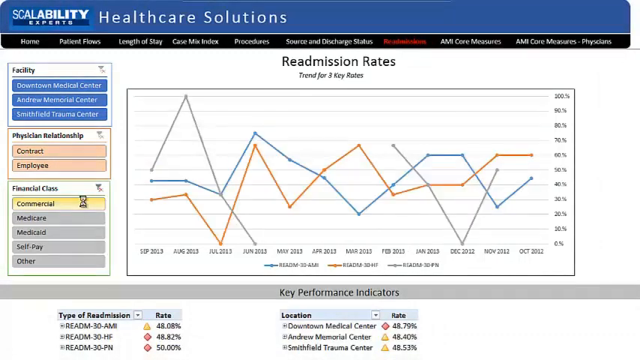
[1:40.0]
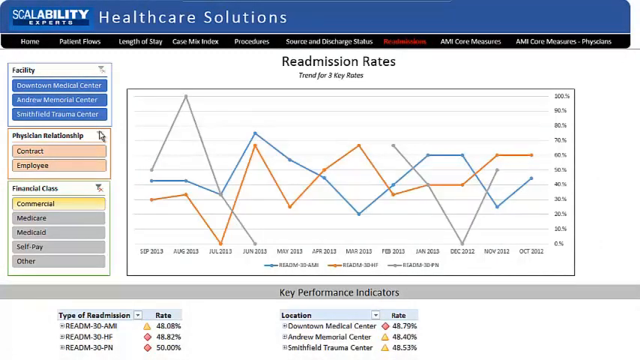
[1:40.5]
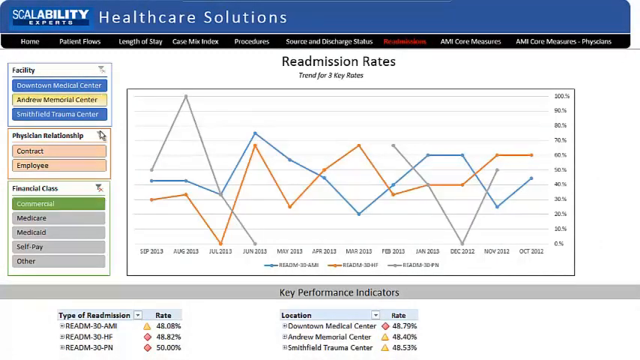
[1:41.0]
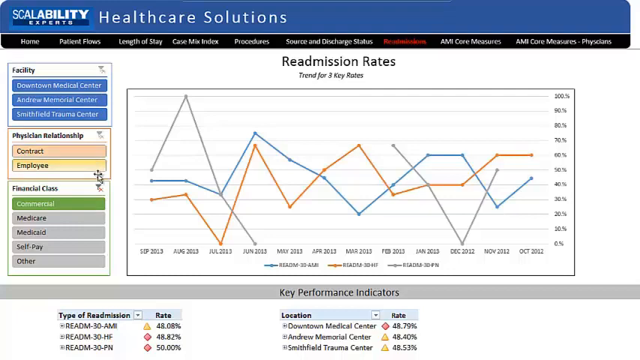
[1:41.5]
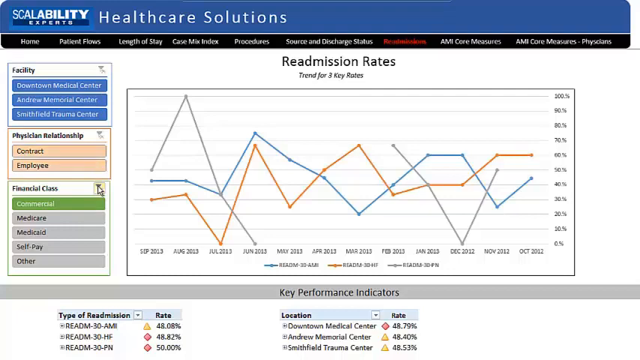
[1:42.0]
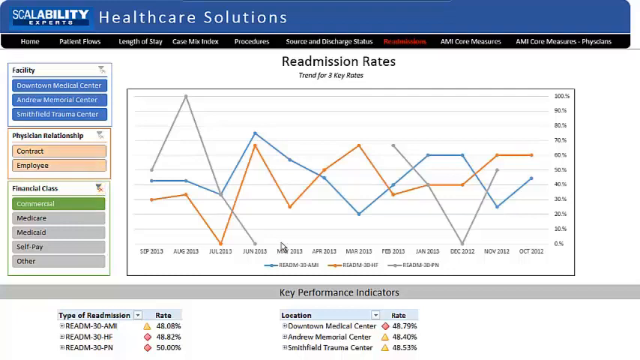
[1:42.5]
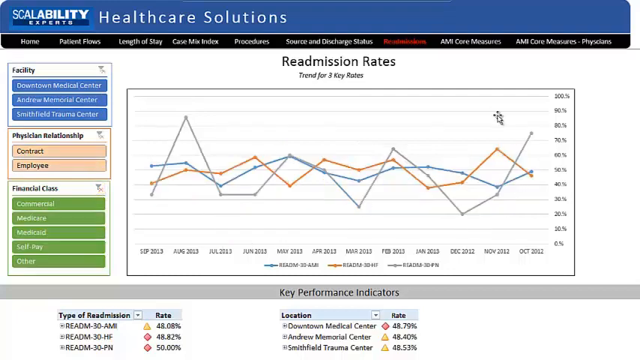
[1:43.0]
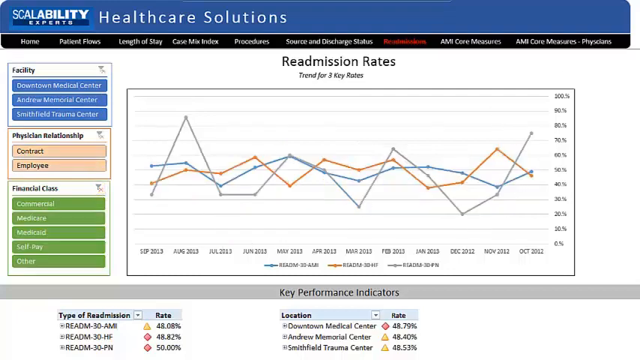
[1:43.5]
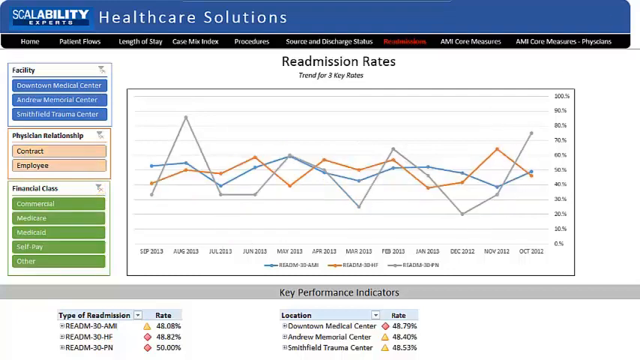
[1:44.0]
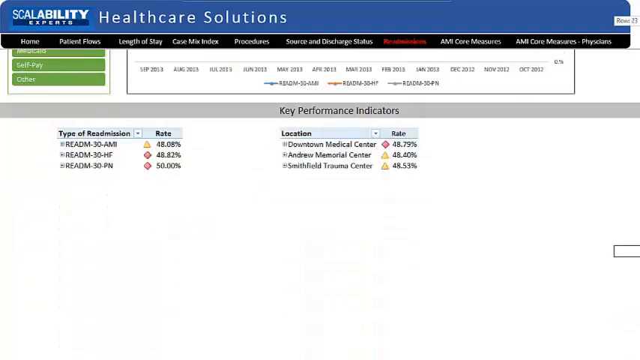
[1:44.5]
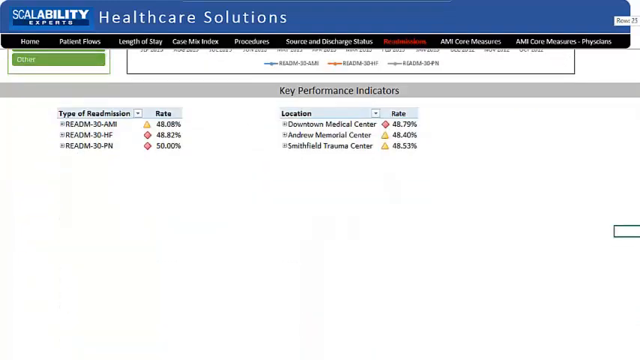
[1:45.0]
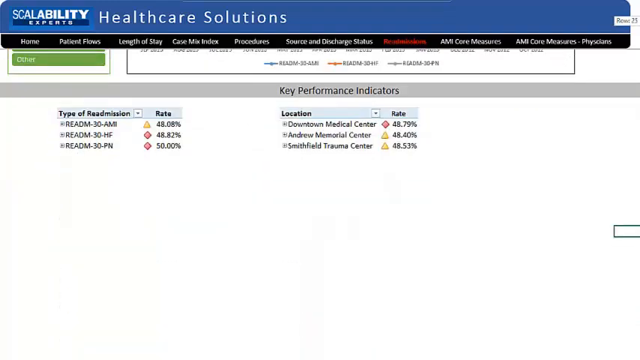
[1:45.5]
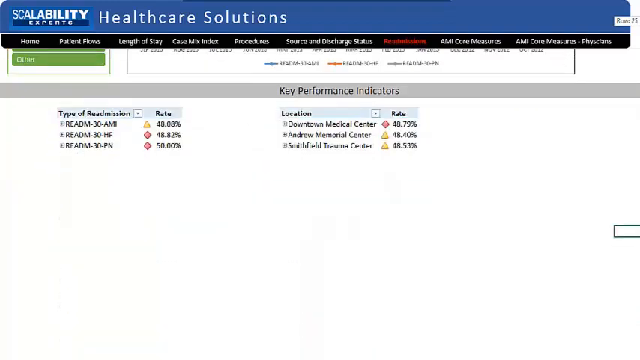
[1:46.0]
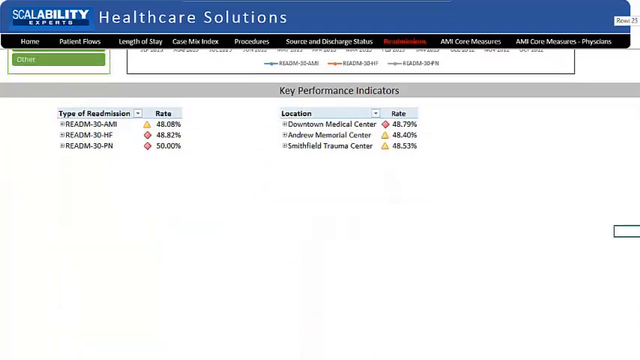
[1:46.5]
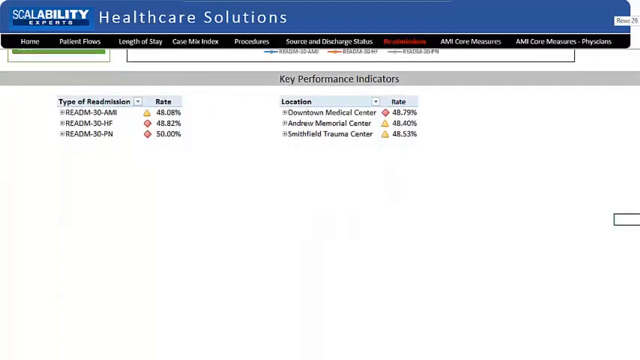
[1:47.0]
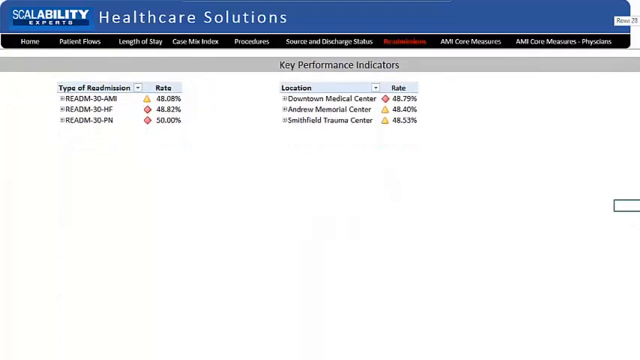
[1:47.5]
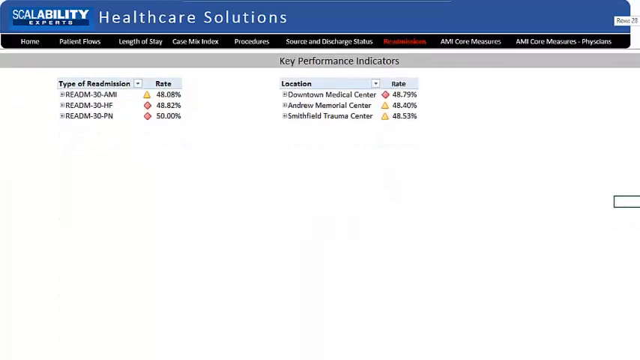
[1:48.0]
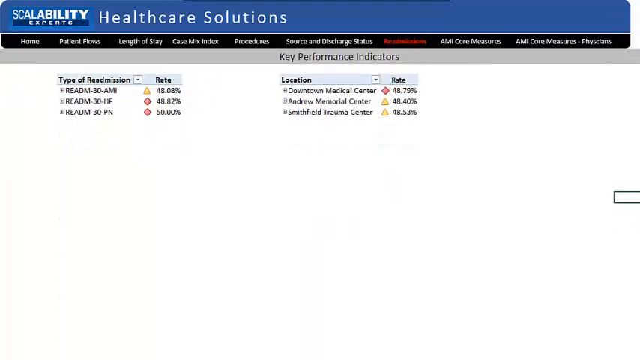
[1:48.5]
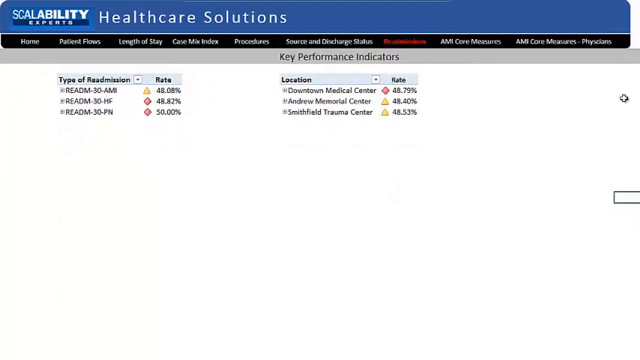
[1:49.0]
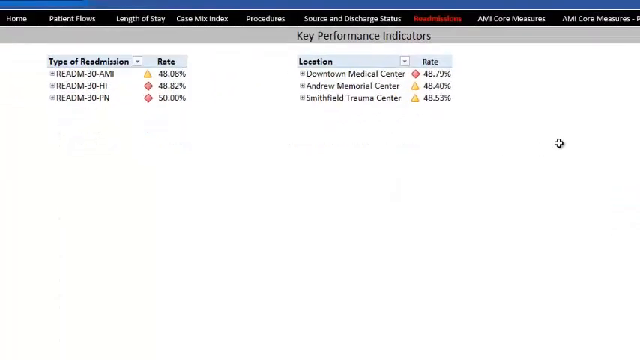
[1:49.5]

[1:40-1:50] Text reads "readmission rates, trend for three key rates" with a graph of gray, blue, and orange lines and dates between September 2013 and October 2012. Information on the left shows faculty, downtown medical center, Andrew Memorial Center, Smithfield Trauma Center, physician relationship, contract, employee, financial class, commercial, Medicare, Medicaid, self-pay, and other. Key performance indicators for location and type of readmission are at the bottom. Settings at the top read home, patient flows, length of stay, case mix index, procedures, source and discharge status, recommendations, AMI core measures, and AMI core measures physicians. The user appears to click on commercial, then hovers up to the small checkbox by financial class. The graph seems to change a bit, and the user scrolls all the way down to the key performance indicators, which show type of readmission with its rate and location with its rate. The user keeps scrolling down before the camera seems to zoom in a bit.